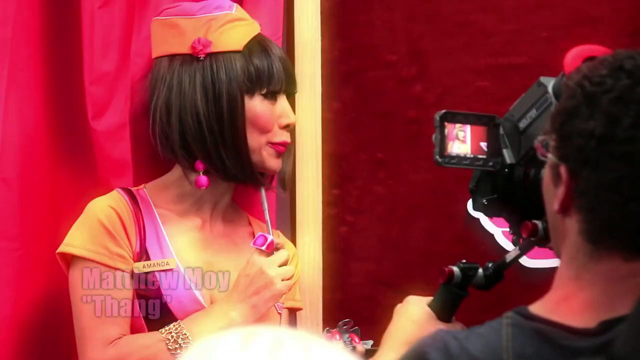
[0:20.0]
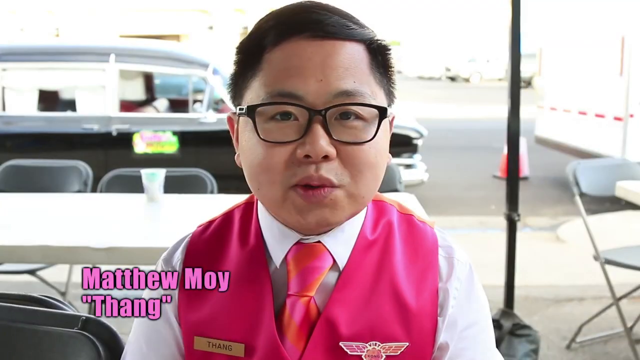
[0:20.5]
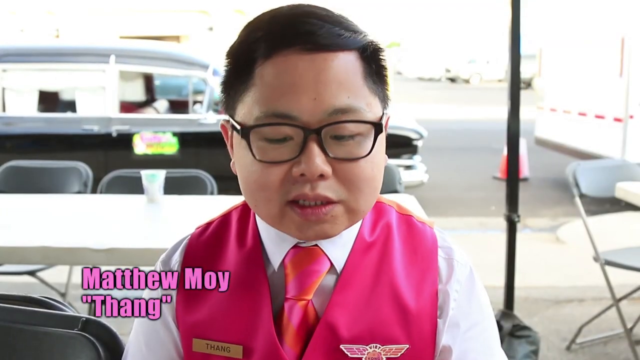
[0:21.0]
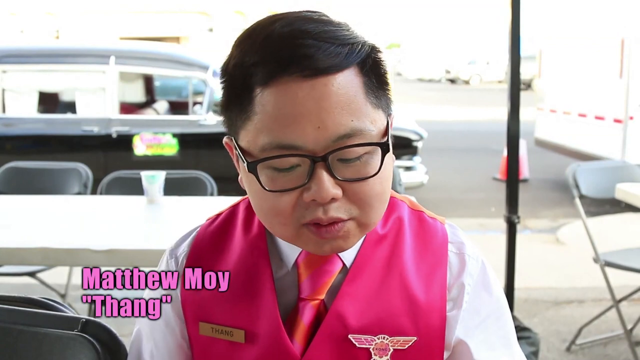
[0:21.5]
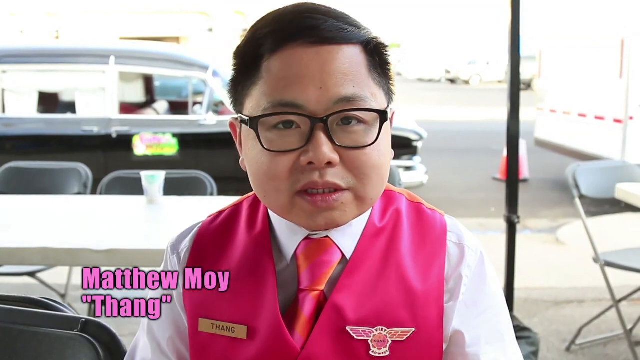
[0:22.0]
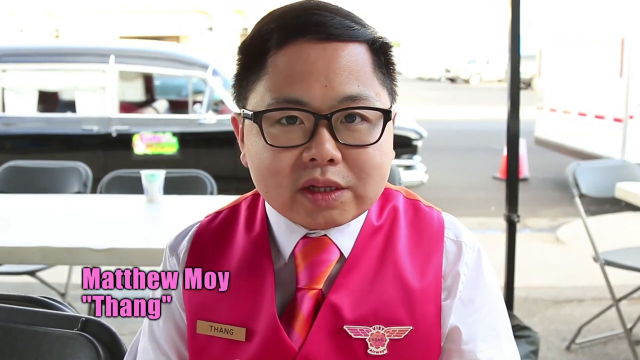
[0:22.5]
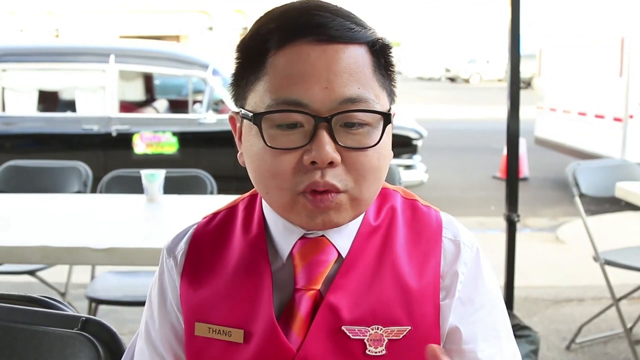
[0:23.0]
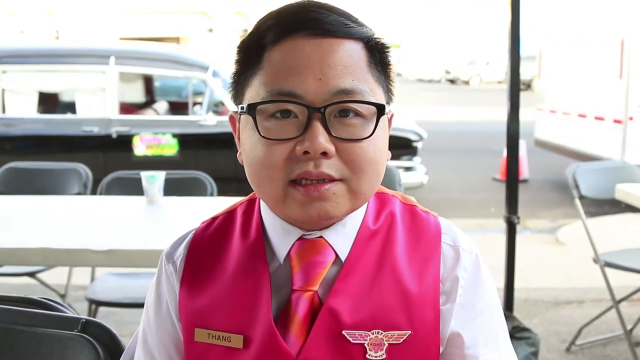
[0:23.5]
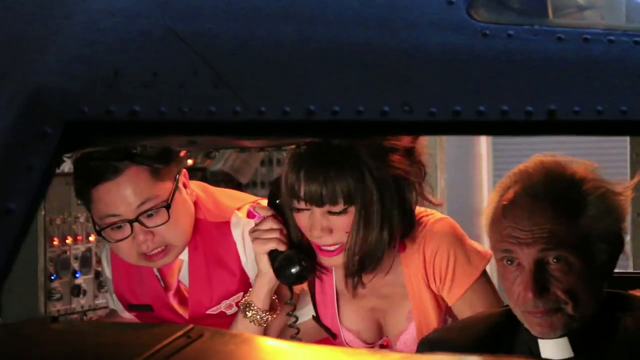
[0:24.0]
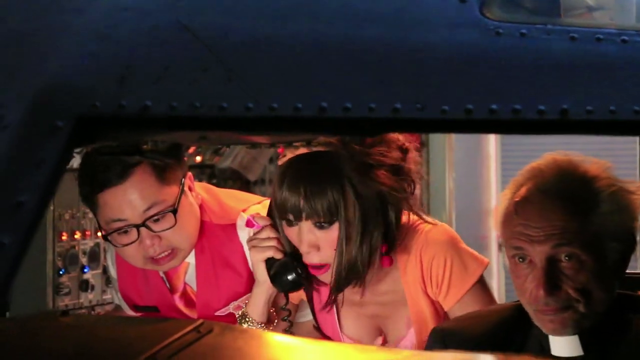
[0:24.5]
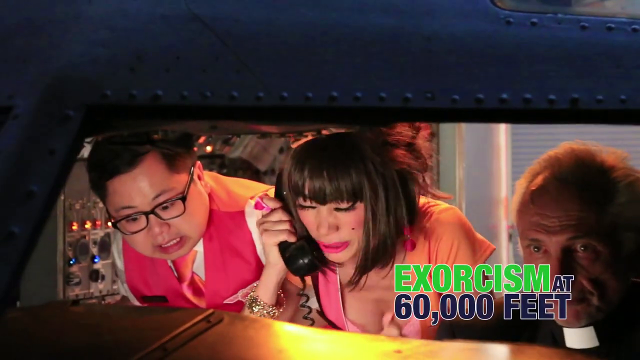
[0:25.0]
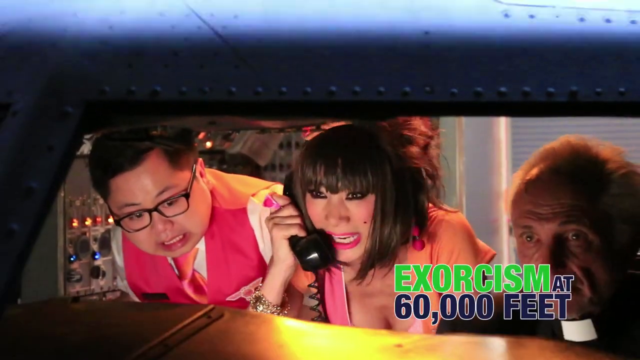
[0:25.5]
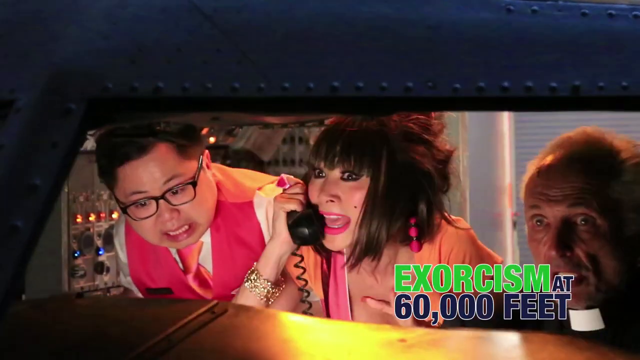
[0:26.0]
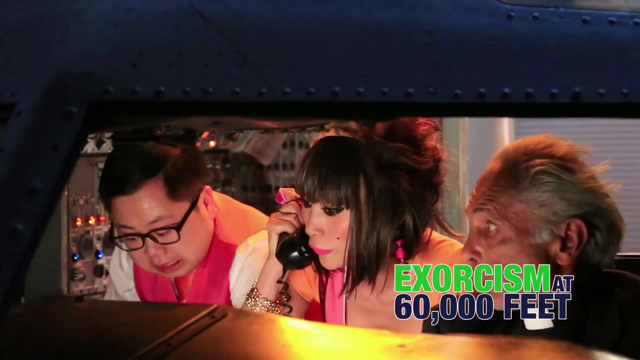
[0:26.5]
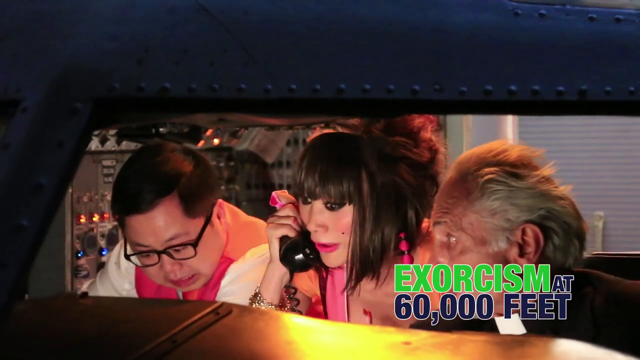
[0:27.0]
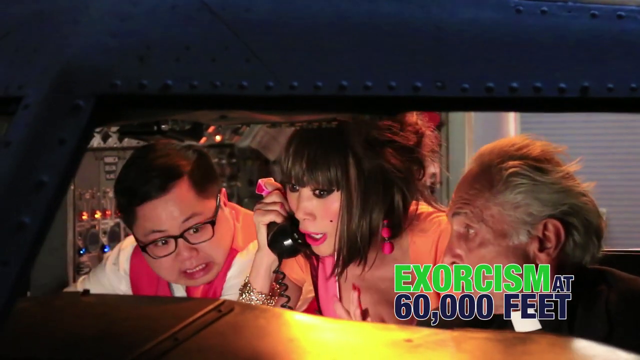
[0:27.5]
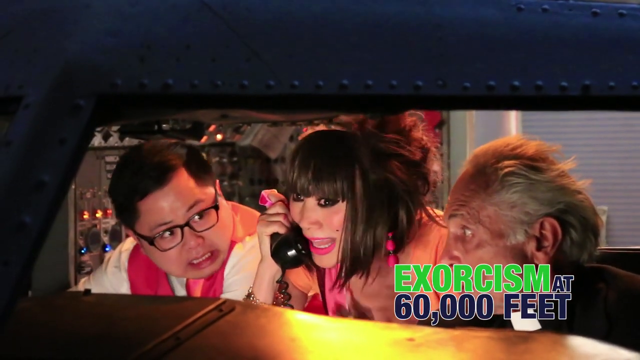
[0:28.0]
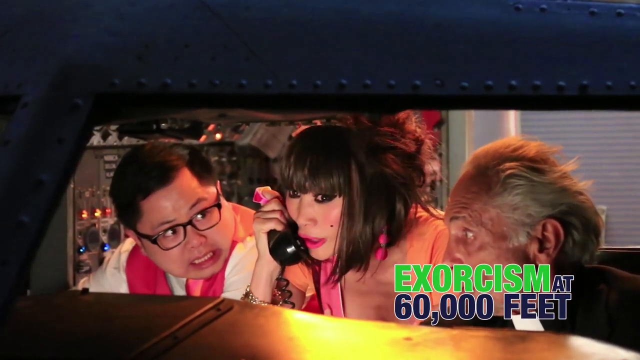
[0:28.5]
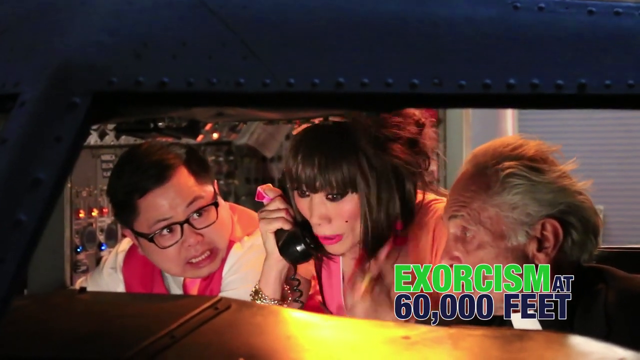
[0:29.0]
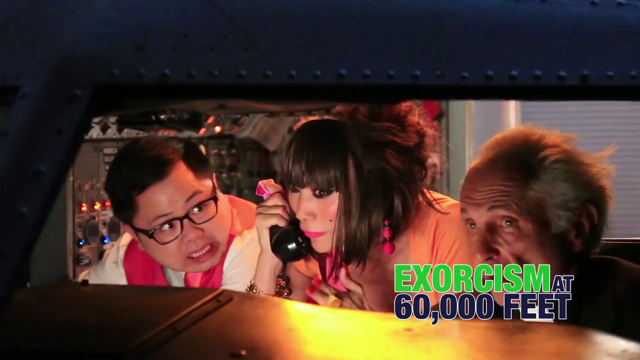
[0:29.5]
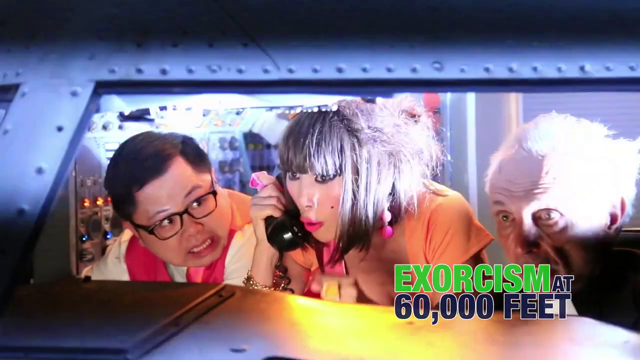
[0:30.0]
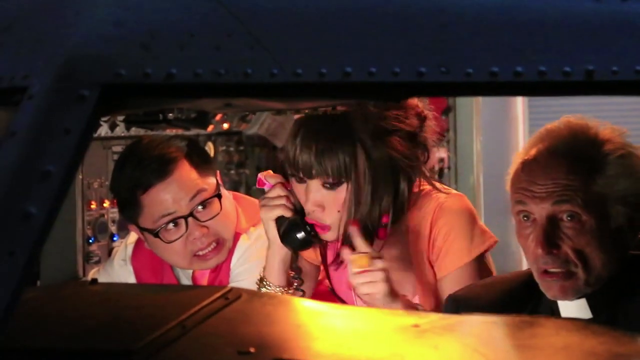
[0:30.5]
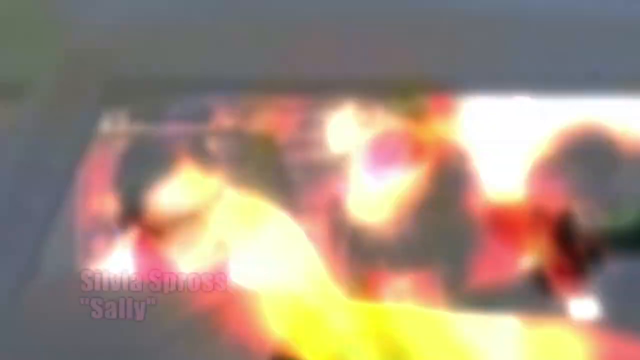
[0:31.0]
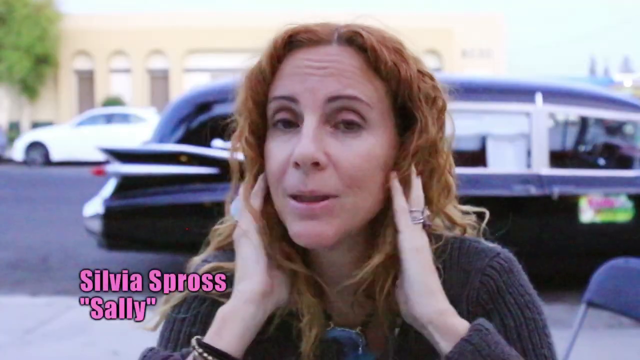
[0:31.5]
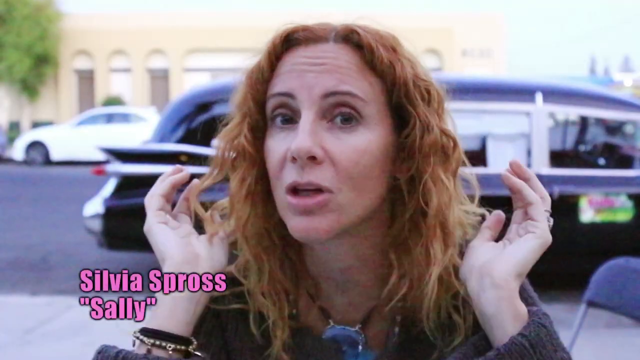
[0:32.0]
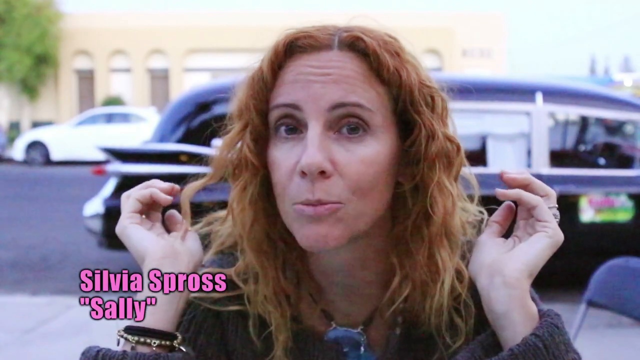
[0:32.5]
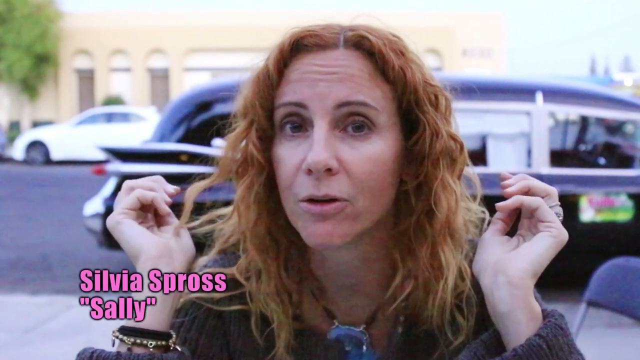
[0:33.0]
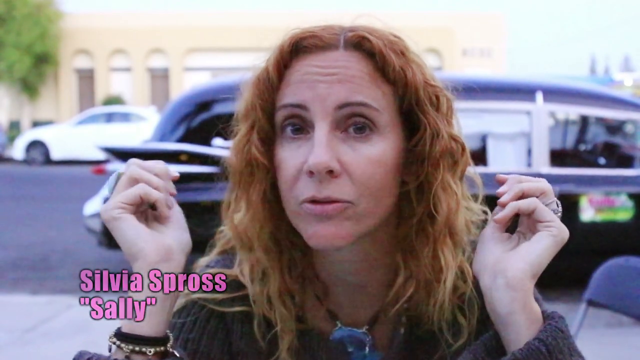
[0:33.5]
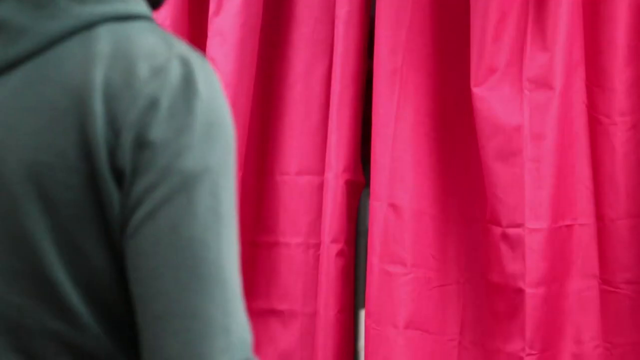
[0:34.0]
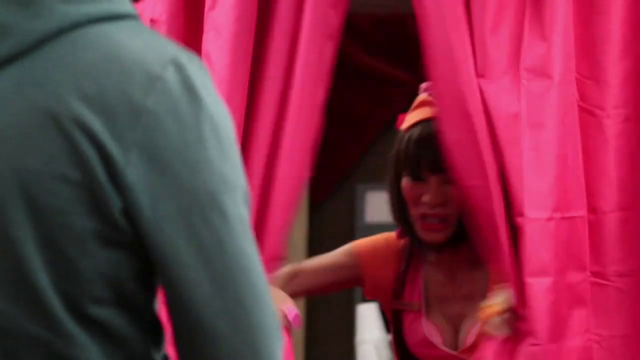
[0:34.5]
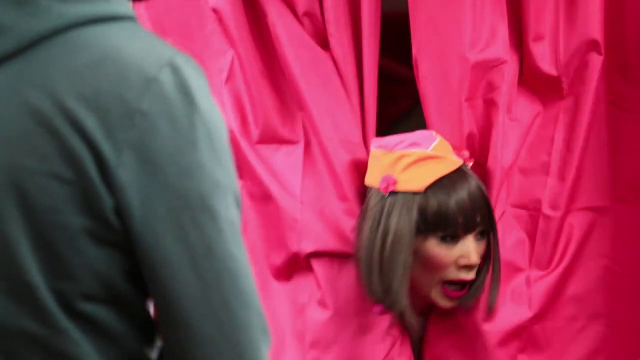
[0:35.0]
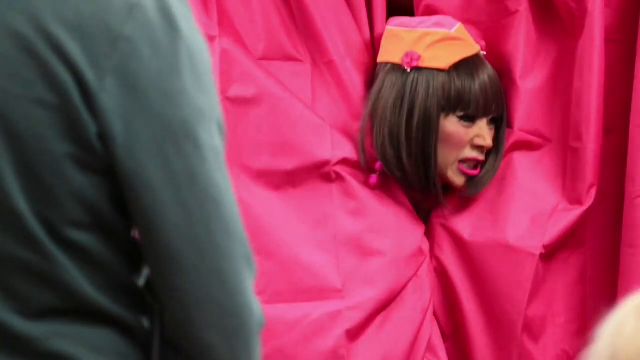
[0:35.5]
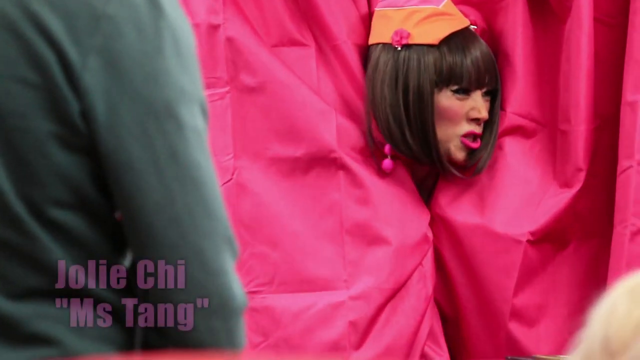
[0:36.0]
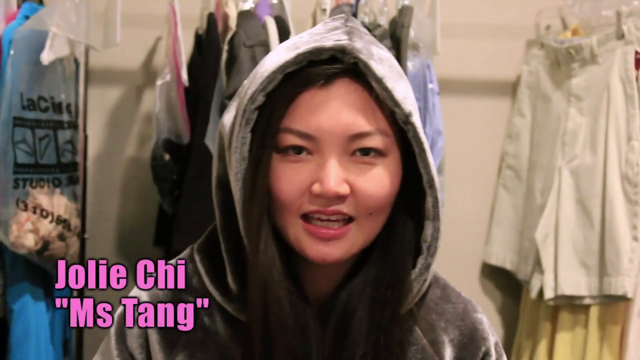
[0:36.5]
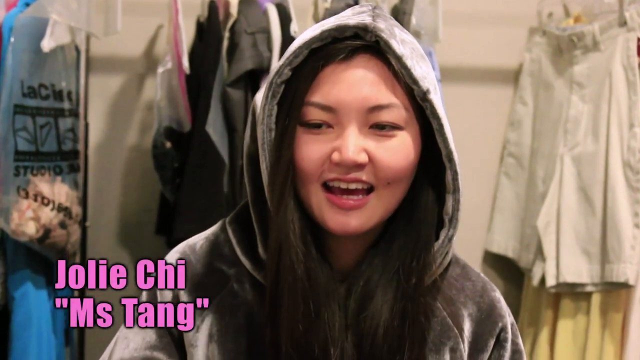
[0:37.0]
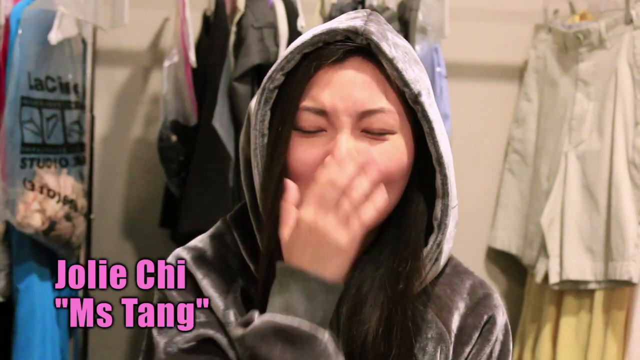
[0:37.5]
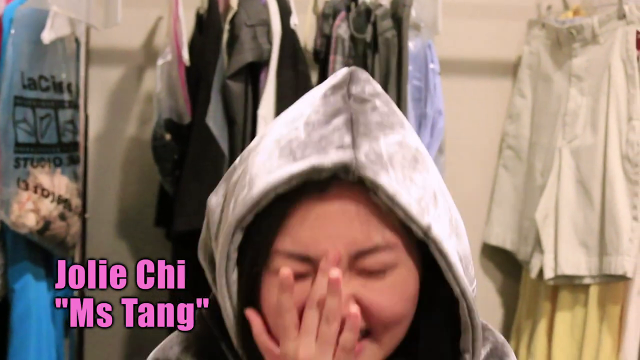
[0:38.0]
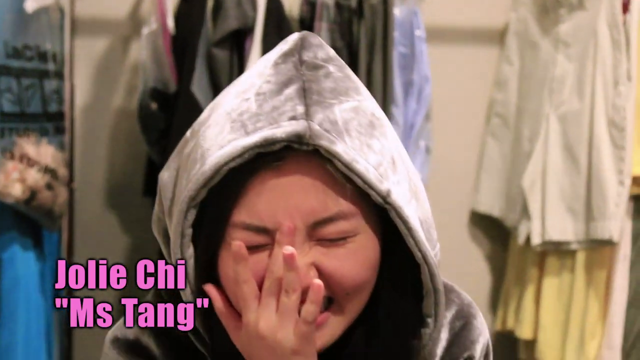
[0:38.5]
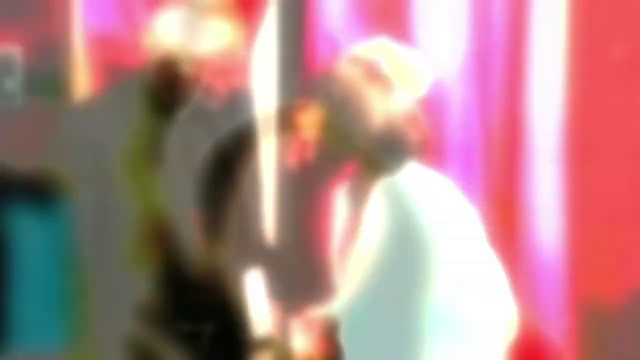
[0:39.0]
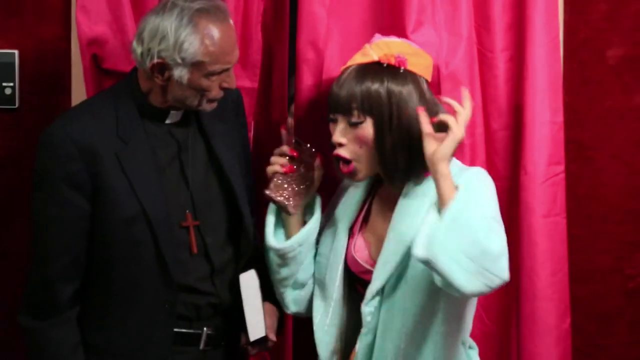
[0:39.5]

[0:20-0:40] Amanda continues to speak, and the shot fades. A man in a white shirt, a pink vest and a pink tie, with black hair and thick-rimmed glasses, looks like he is sitting at a table, speaking directly at the camera. Behind him are another table with some chairs and a black car. He looks like he is dressed as an airplane steward. A clip from the show follows: he is standing off to the left, and Amanda is the woman in the middle, holding a phone in her right hand and screaming into it. The man on the left looks scared, looking over to his left at her with a terrified look on his face. The priest is sitting there as well, and they all look like they are in the pilot seat of an airplane. Another woman, one of the actresses, who plays Sally, has red wavy hair. She has both hands up, kind of against her ears and hair, then pulls them off her face while still holding them at the sides of her head with her fingers closed in, and then puts both hands down in front of her body. The stewardess Amanda then comes in, grabs the curtains with both hands and pulls them tight around her neck so that just her face peeks out.